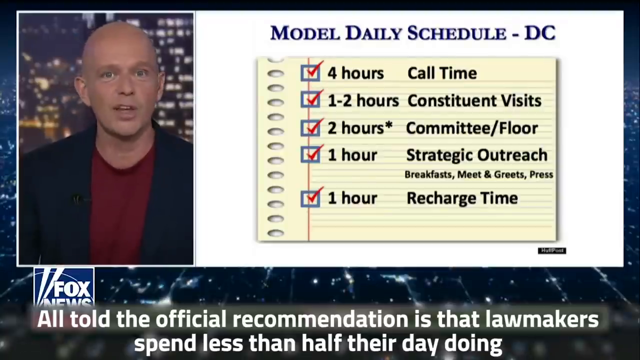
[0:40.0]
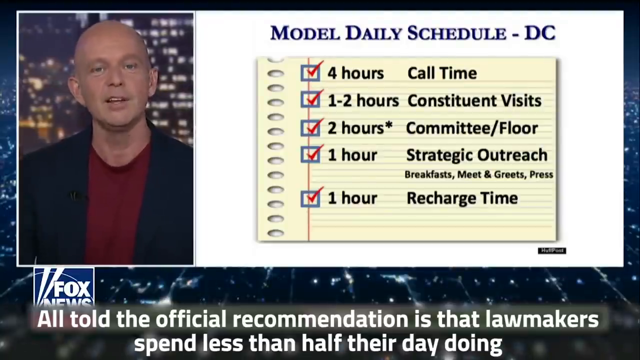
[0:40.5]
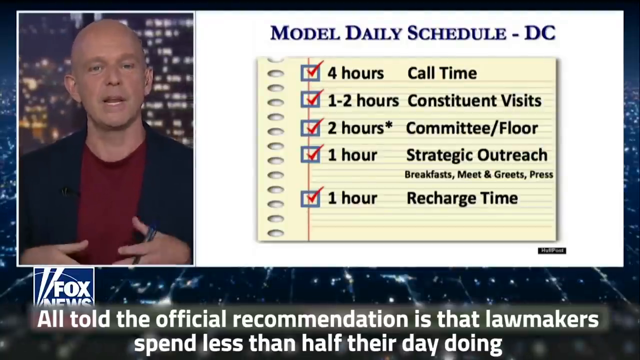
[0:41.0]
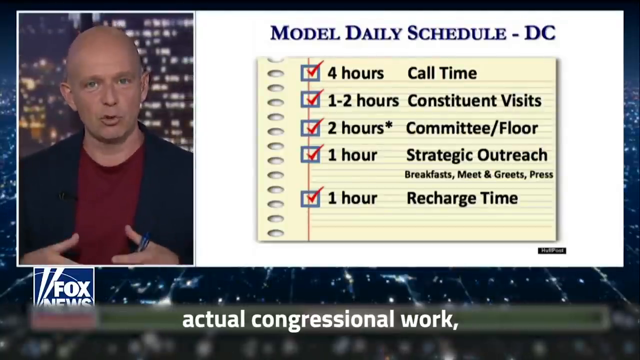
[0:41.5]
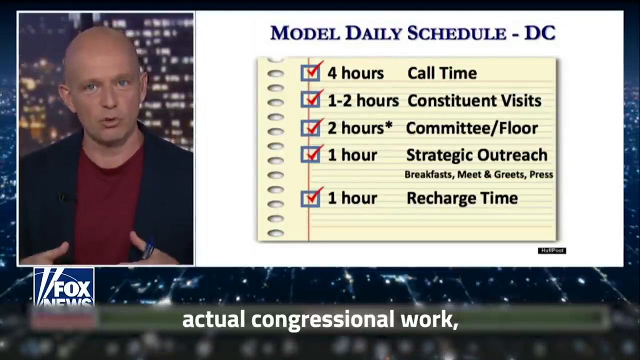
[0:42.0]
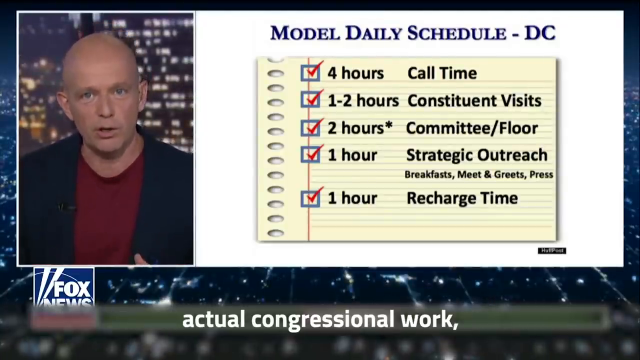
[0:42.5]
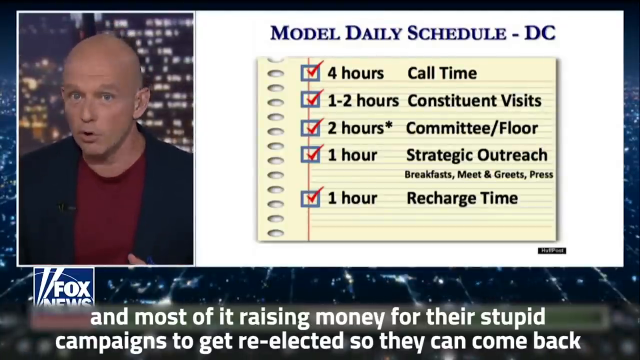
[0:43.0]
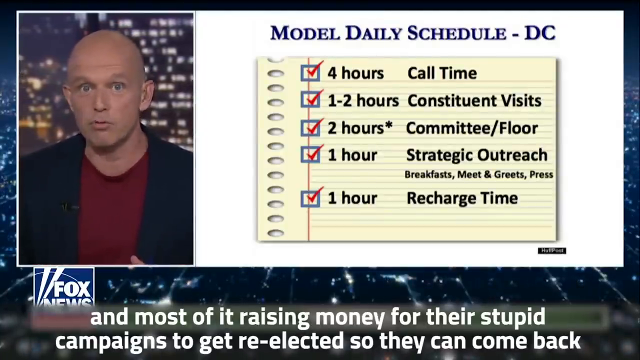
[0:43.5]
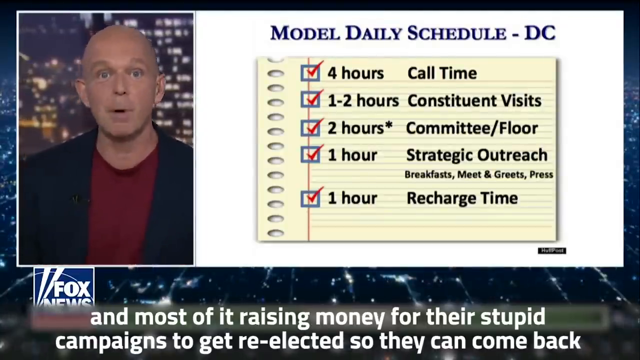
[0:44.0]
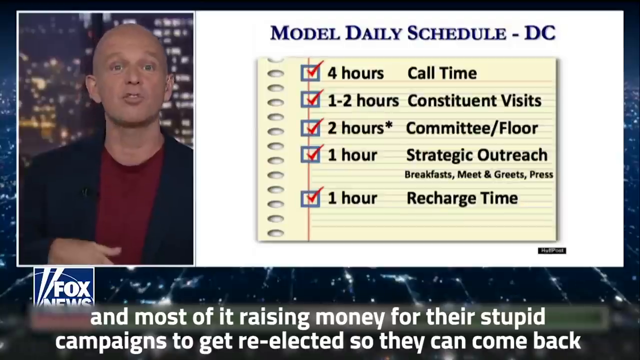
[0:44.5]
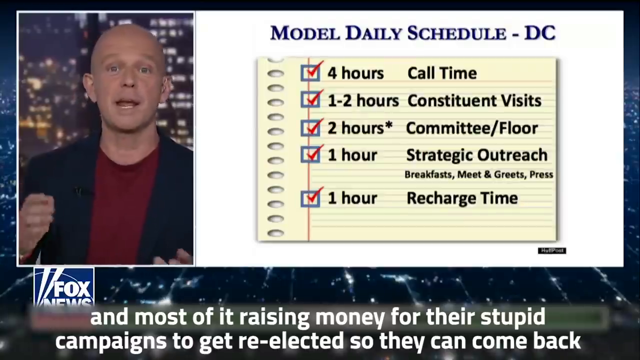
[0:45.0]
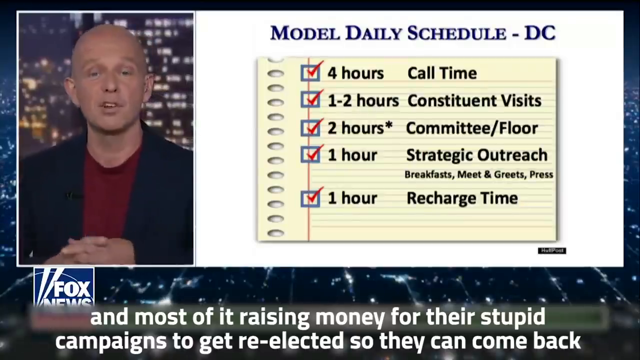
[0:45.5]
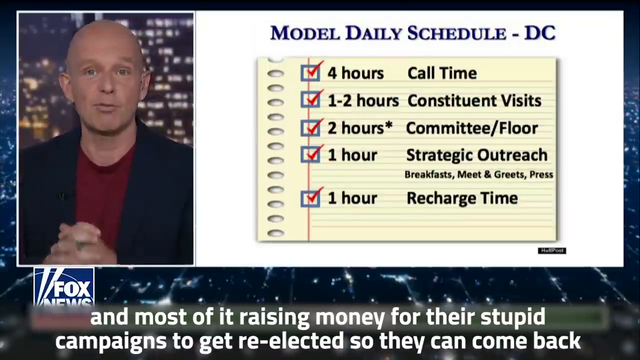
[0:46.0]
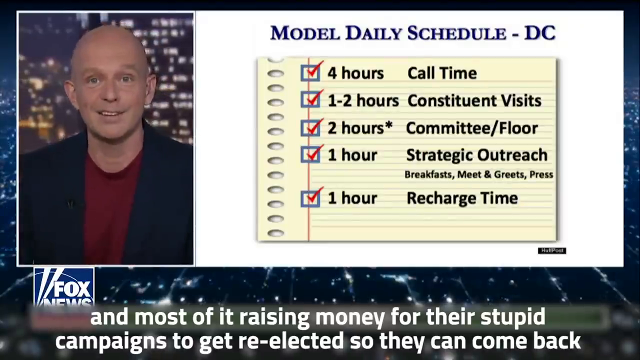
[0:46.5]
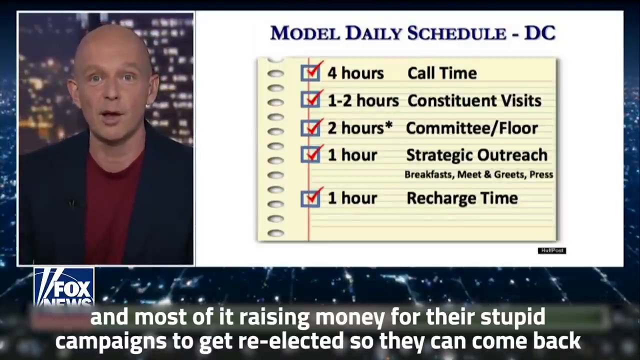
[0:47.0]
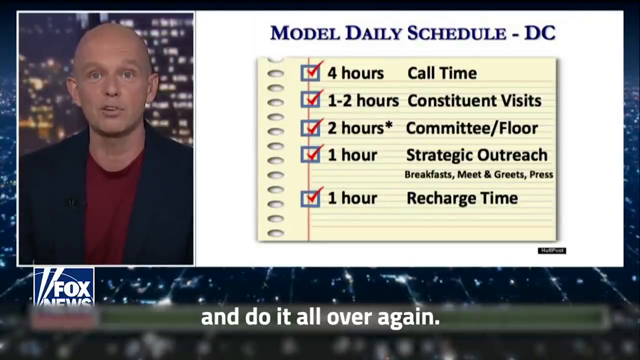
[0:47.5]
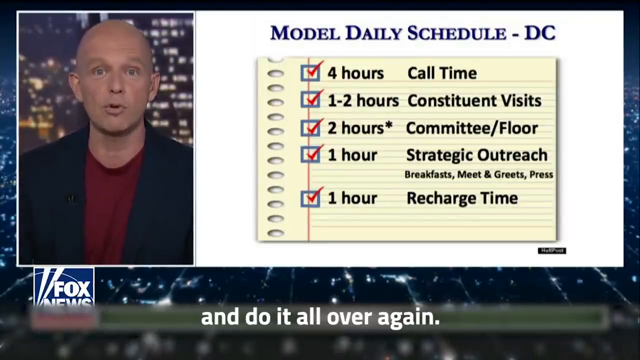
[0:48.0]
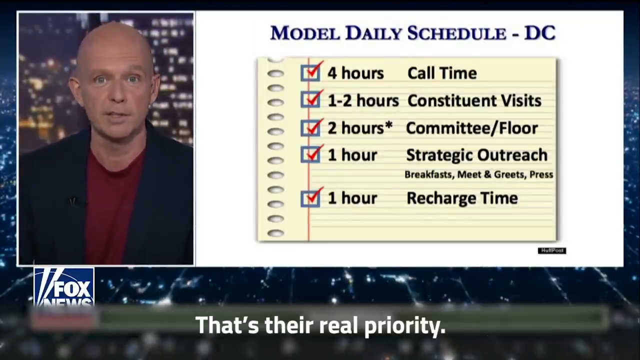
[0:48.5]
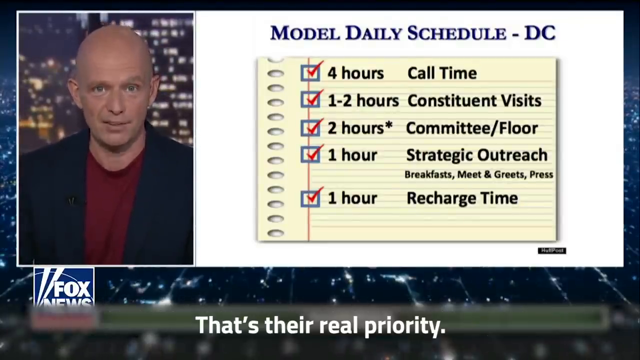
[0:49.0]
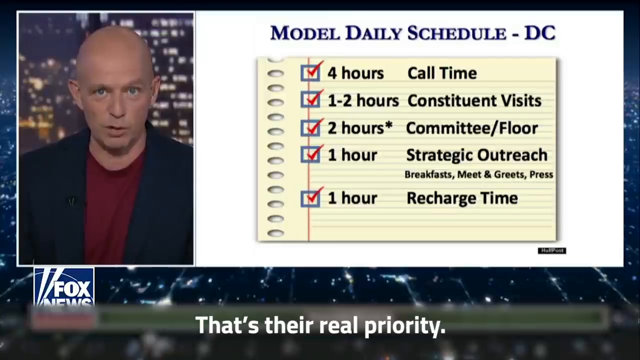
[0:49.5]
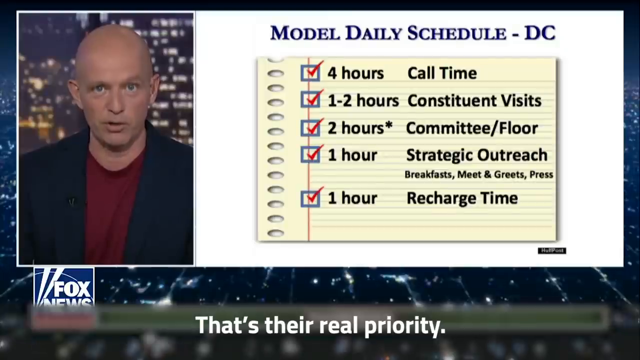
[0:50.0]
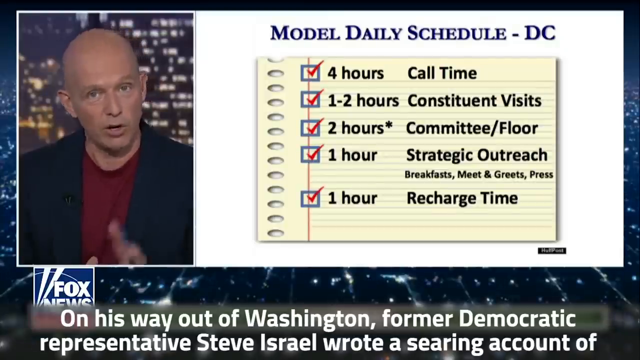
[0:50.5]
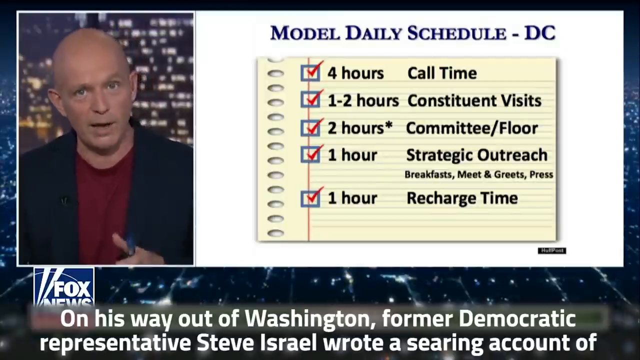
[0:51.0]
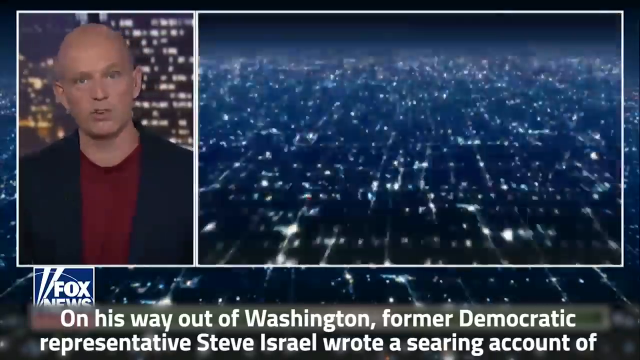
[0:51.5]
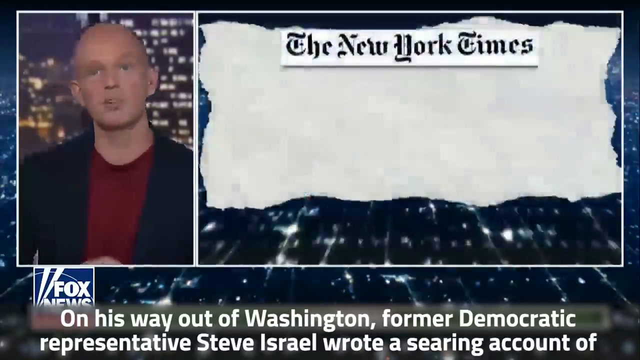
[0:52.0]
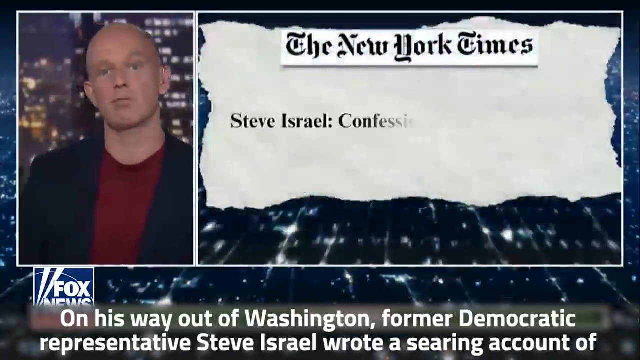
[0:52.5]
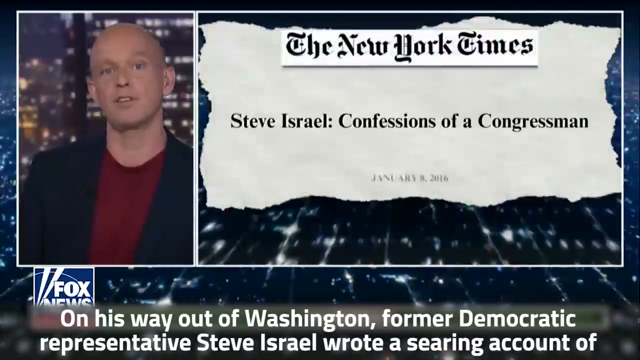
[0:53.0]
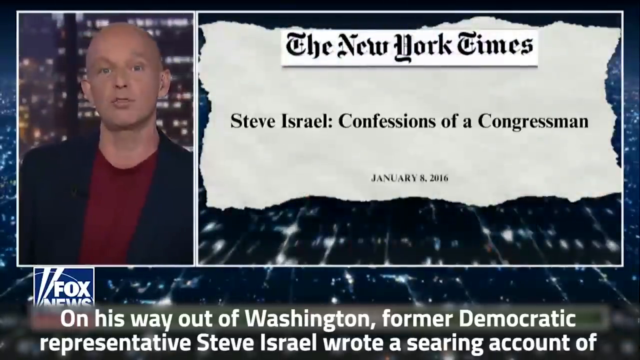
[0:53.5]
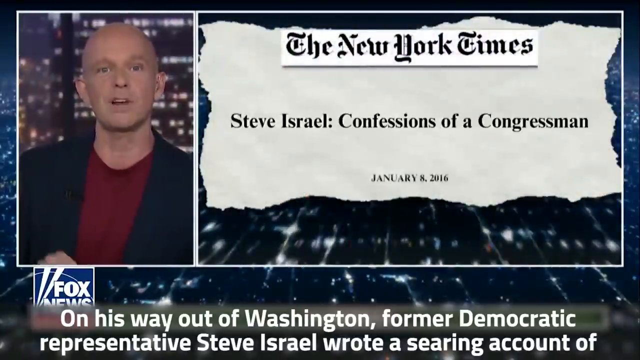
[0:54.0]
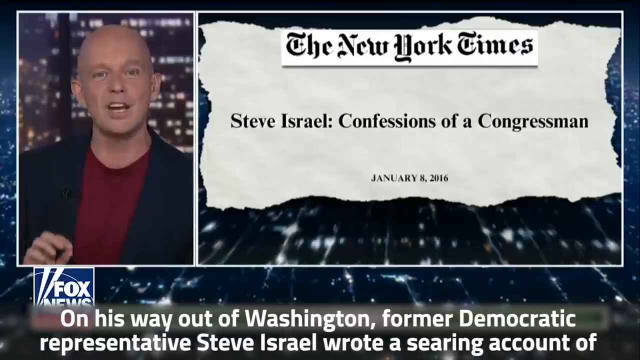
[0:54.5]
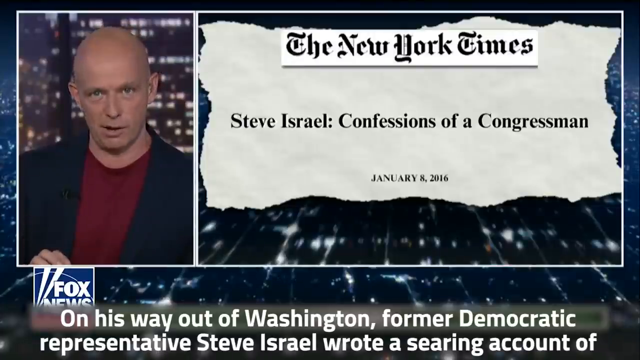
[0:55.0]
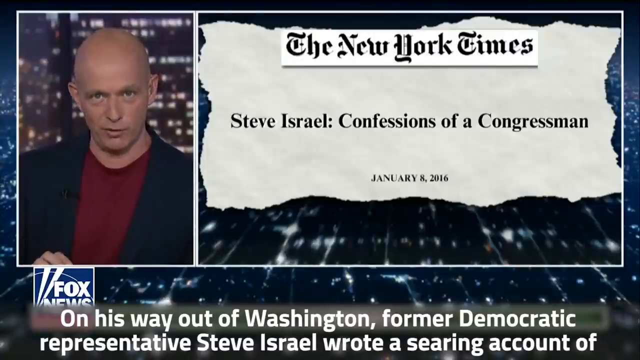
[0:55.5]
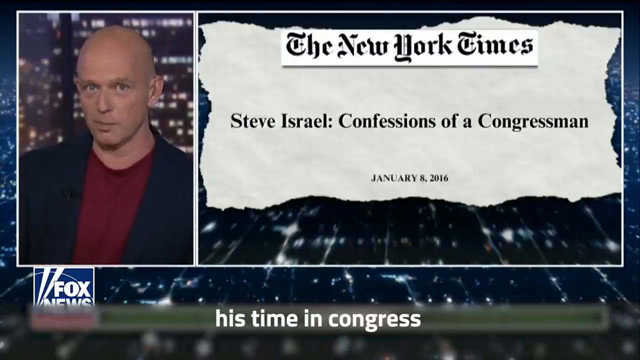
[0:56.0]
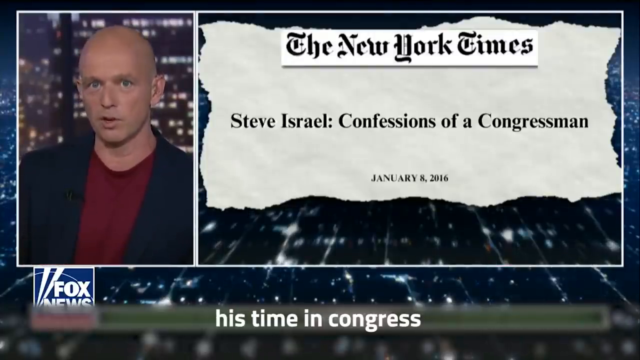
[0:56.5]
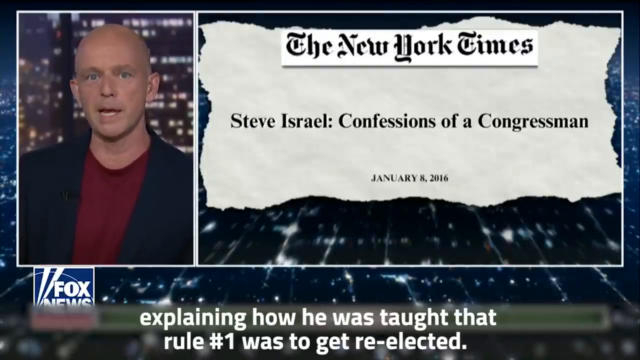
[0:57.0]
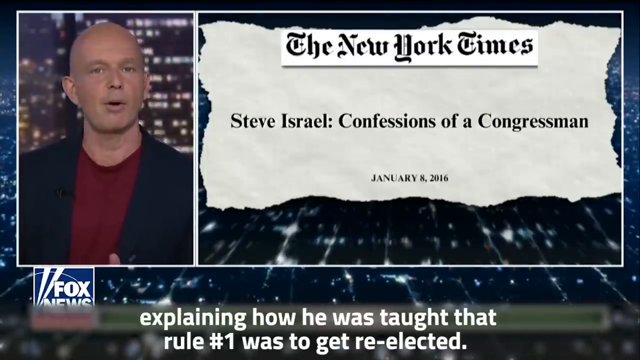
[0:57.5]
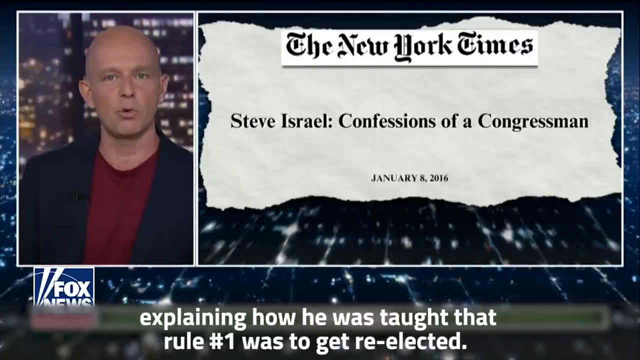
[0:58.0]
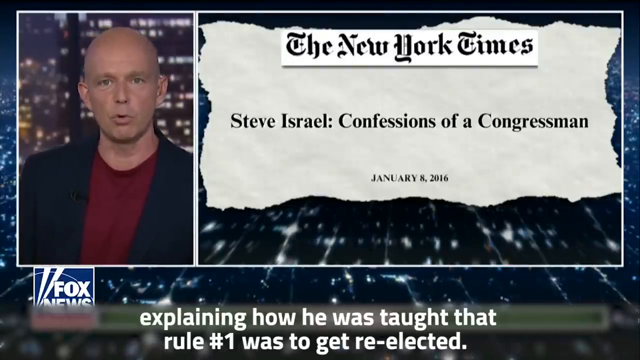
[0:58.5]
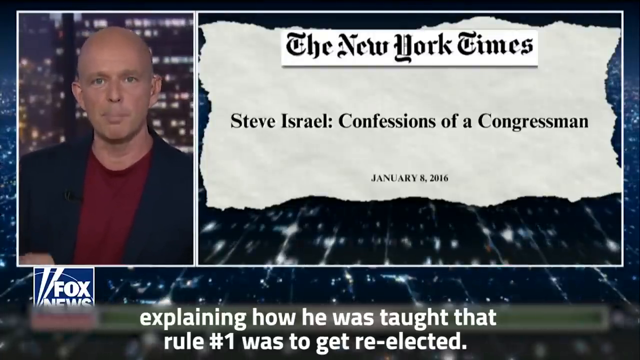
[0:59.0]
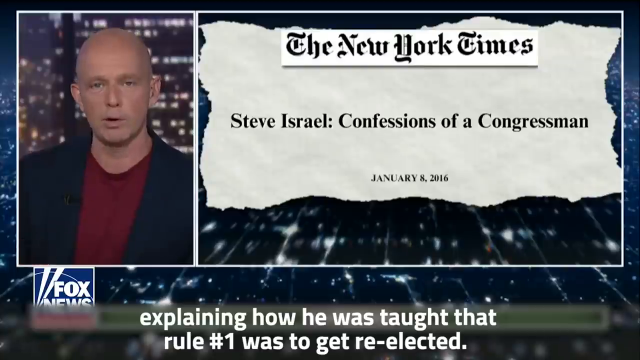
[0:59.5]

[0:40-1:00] The Fox News reporter, bald and wearing a maroon shirt and a blue blazer, reports on Steve Israel. On the other side of the screen is a New York Times piece about Steve Israel titled "Confession of a Congressman." The on-screen text includes "A leaked PowerPoint slide from 2018 Congressional Orientation for Newly Elected Democrats recommended that every" member spend hours daily raising money plus additional hours of strategic outreach, "i.e. sucking up," as well as "All told, official recommendation is that lawmakers spend less than half their day doing their work" and "On his way out of Washington, the former Democratic representative."